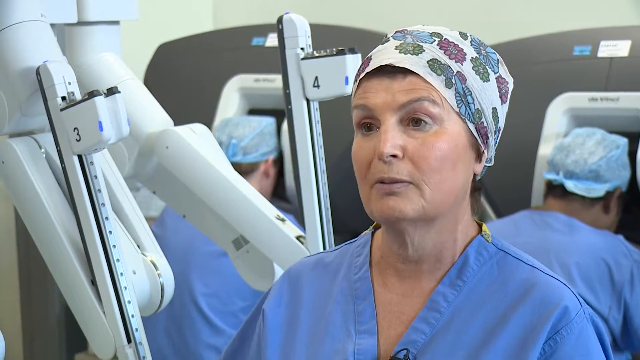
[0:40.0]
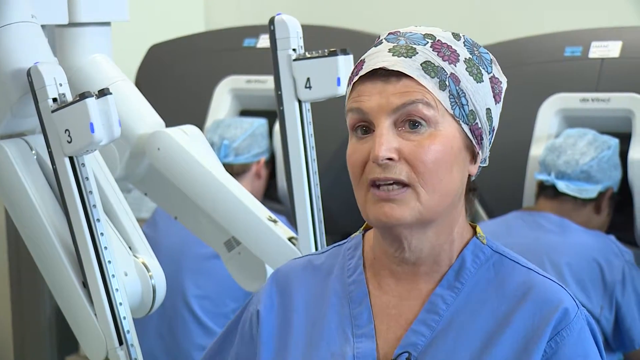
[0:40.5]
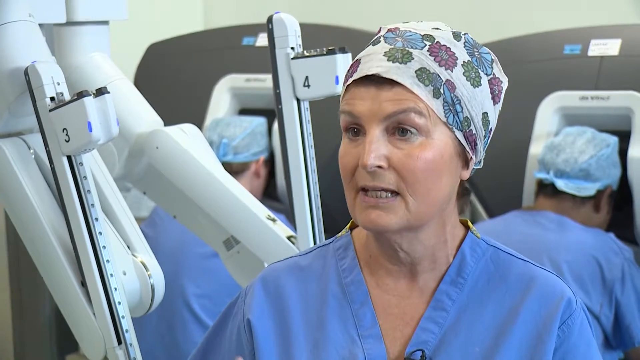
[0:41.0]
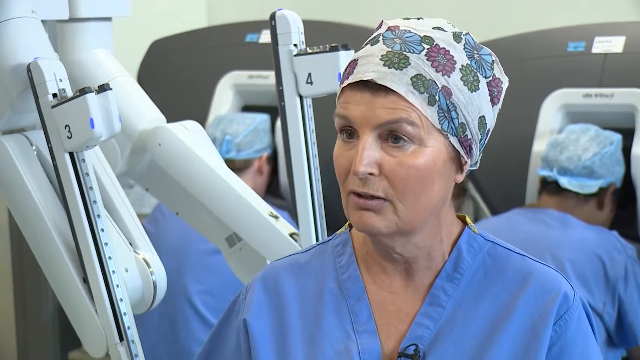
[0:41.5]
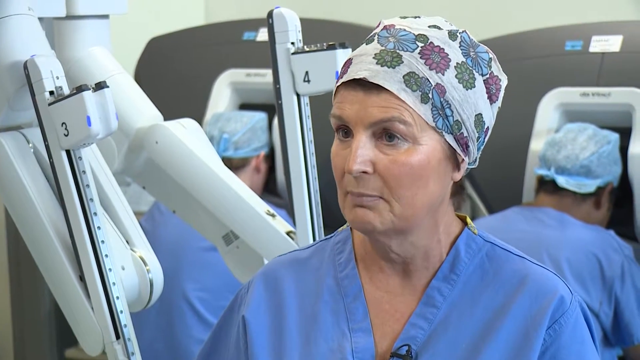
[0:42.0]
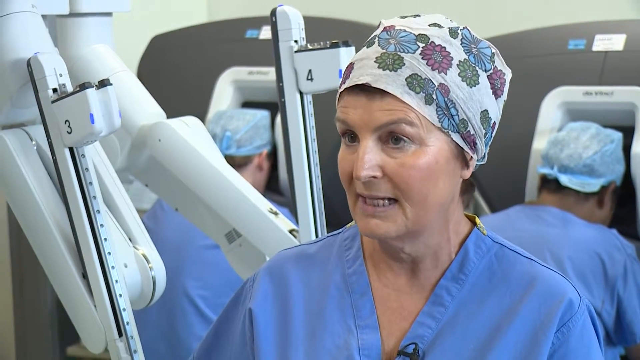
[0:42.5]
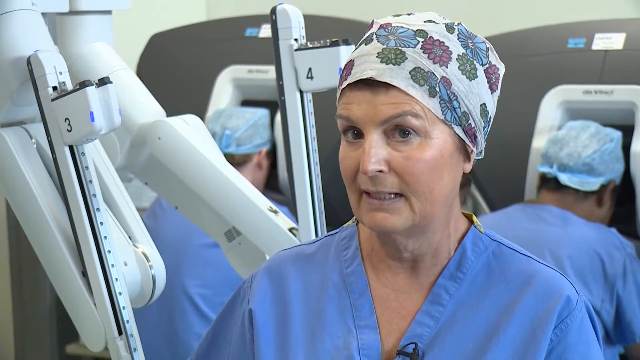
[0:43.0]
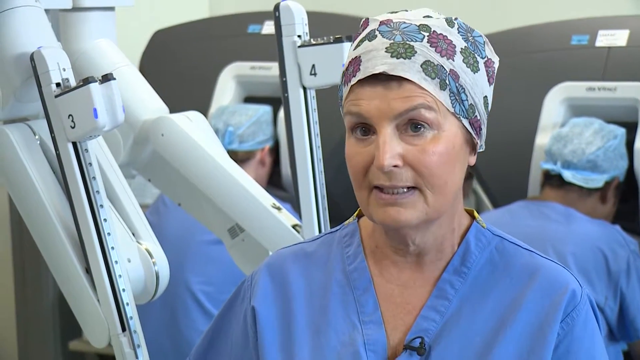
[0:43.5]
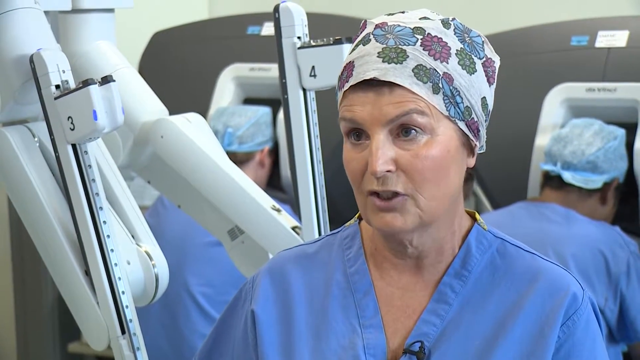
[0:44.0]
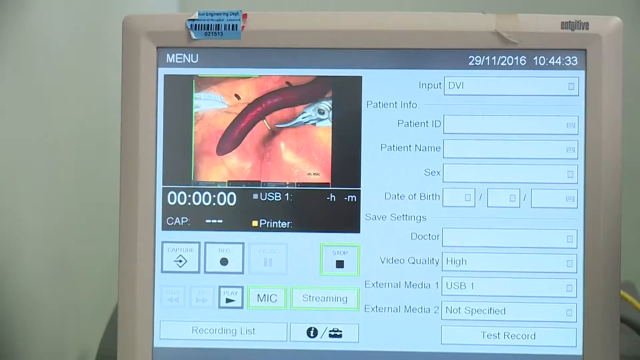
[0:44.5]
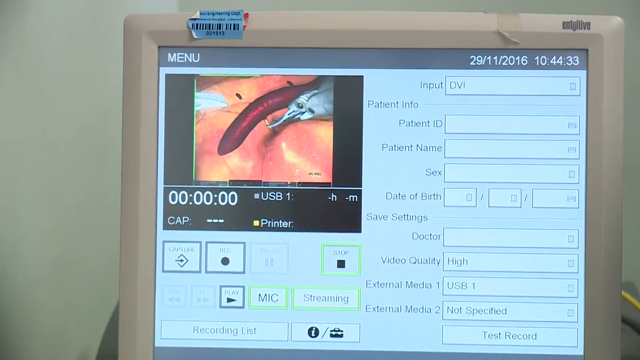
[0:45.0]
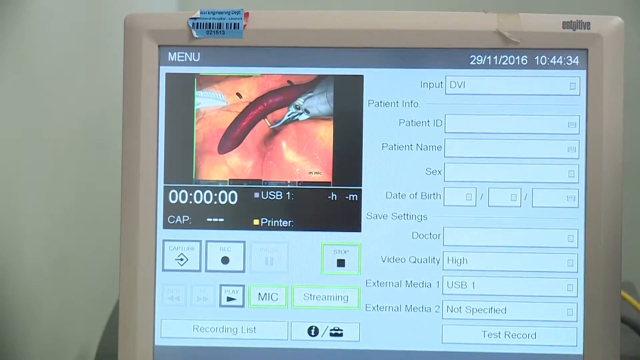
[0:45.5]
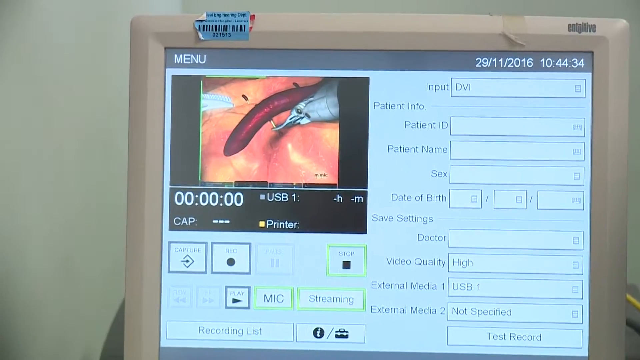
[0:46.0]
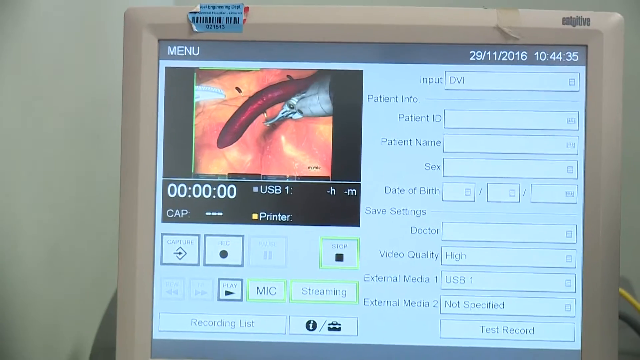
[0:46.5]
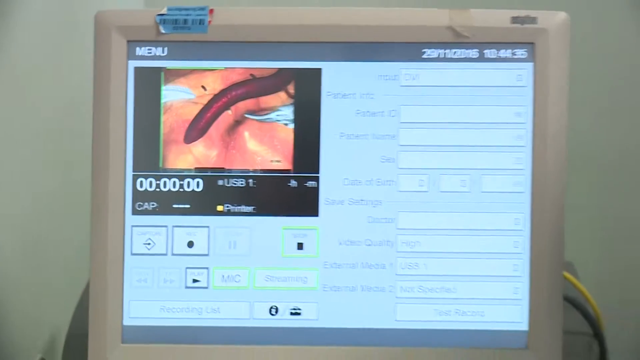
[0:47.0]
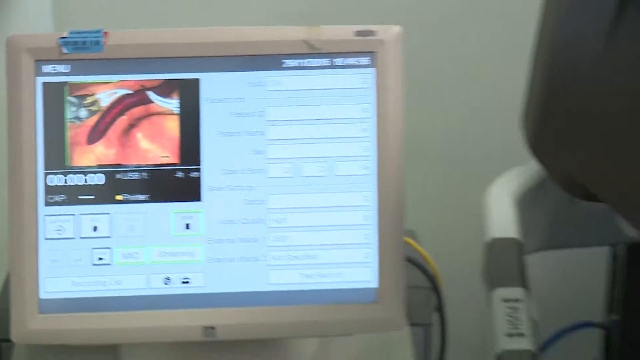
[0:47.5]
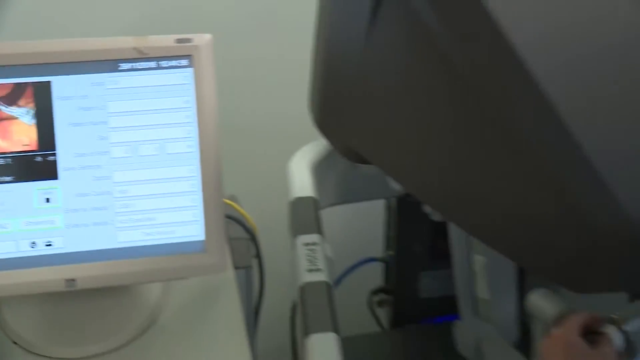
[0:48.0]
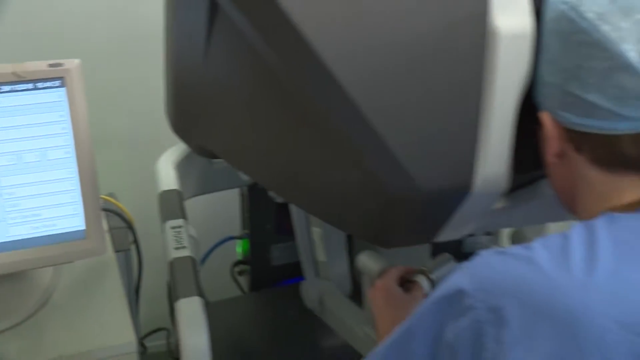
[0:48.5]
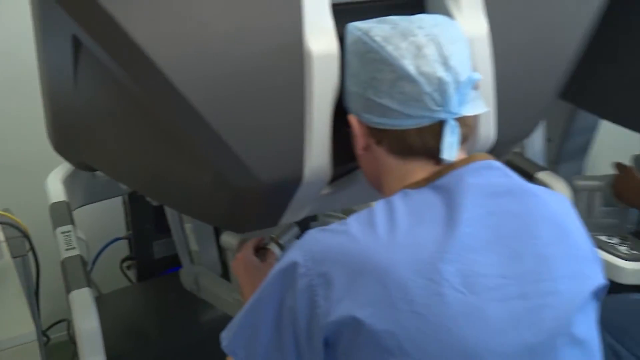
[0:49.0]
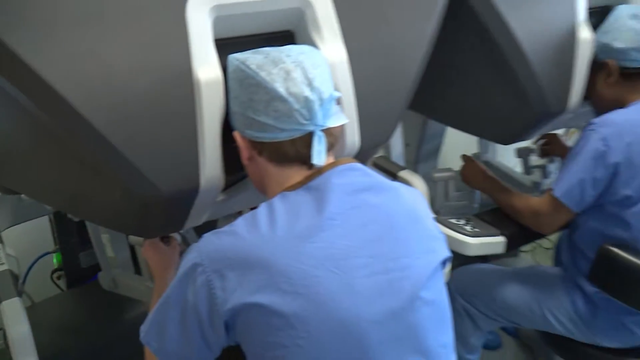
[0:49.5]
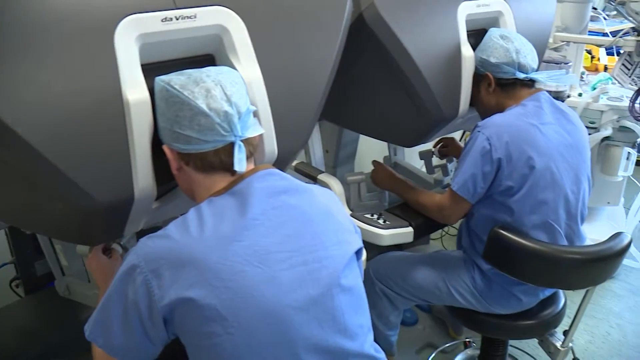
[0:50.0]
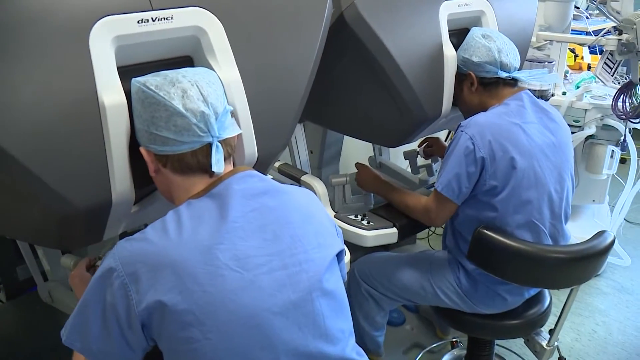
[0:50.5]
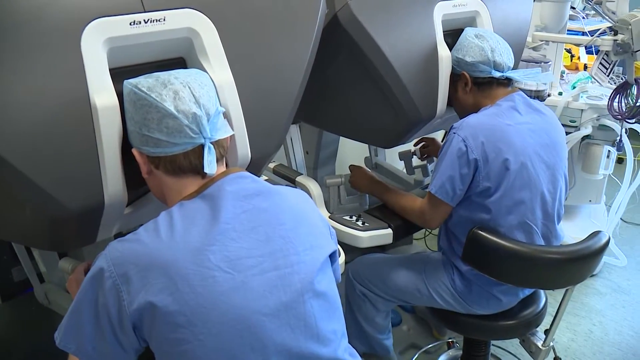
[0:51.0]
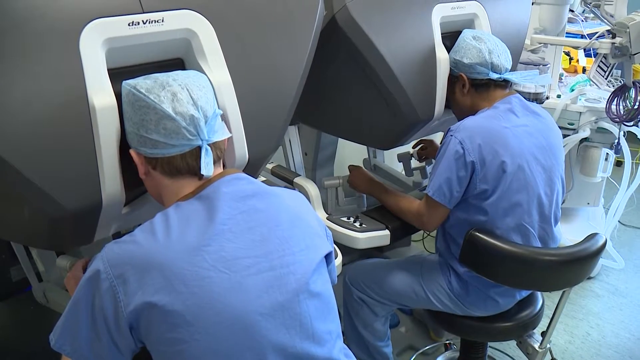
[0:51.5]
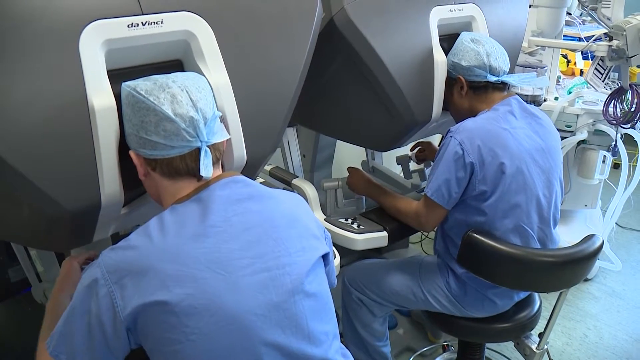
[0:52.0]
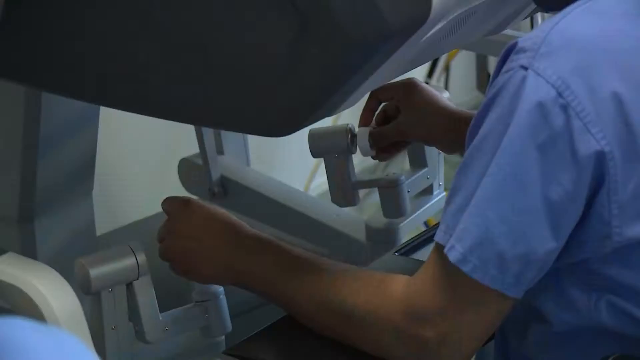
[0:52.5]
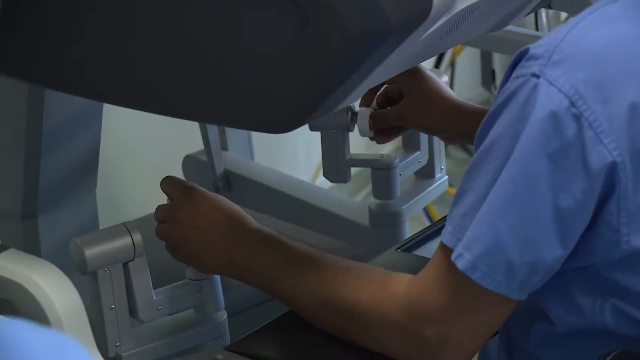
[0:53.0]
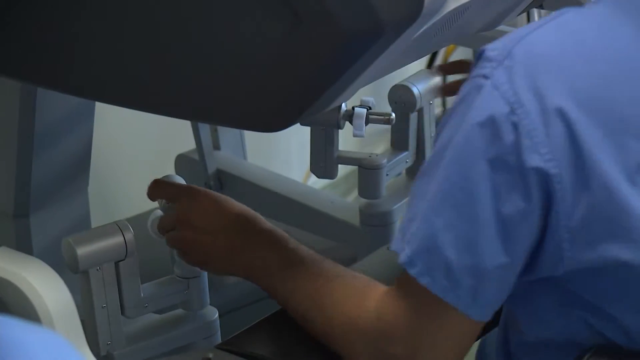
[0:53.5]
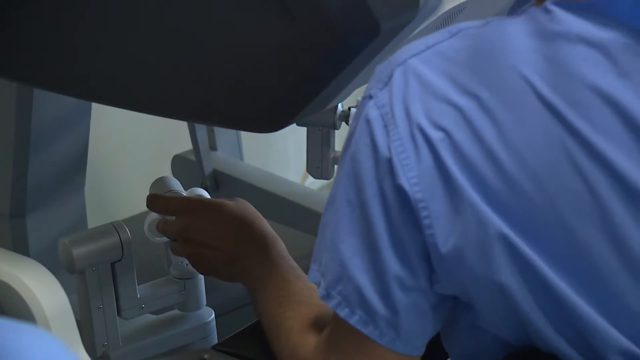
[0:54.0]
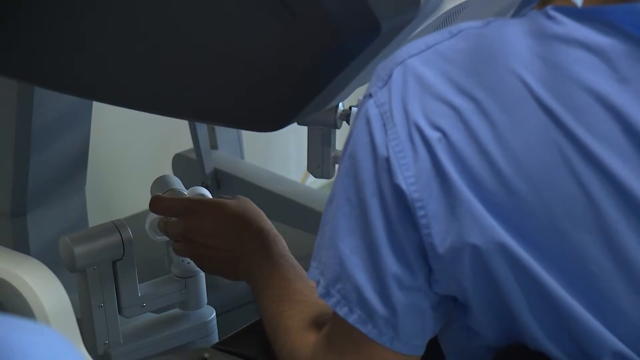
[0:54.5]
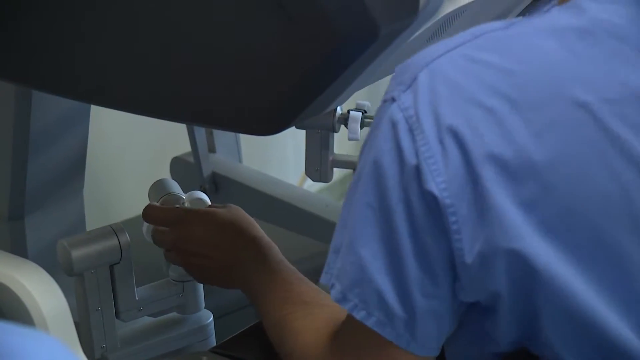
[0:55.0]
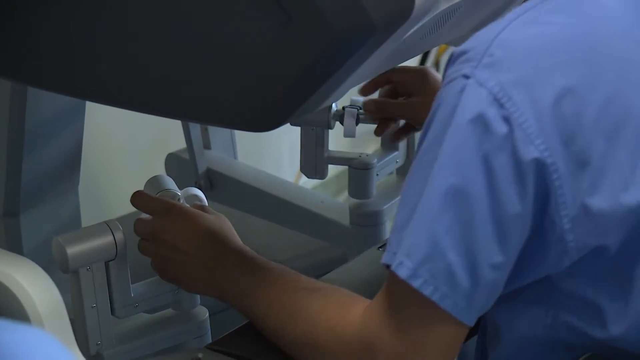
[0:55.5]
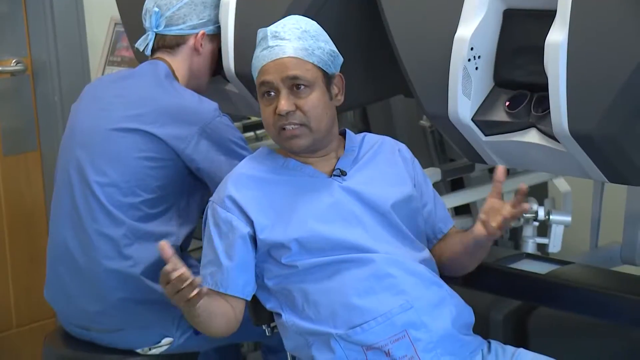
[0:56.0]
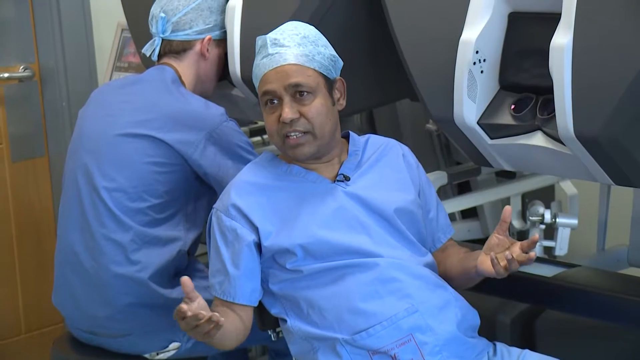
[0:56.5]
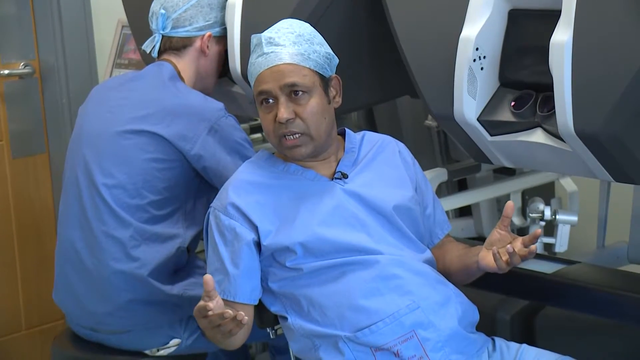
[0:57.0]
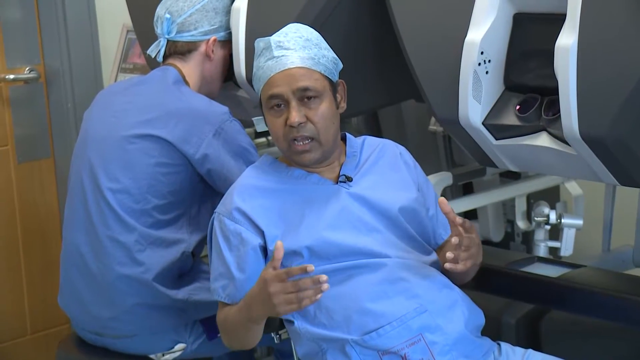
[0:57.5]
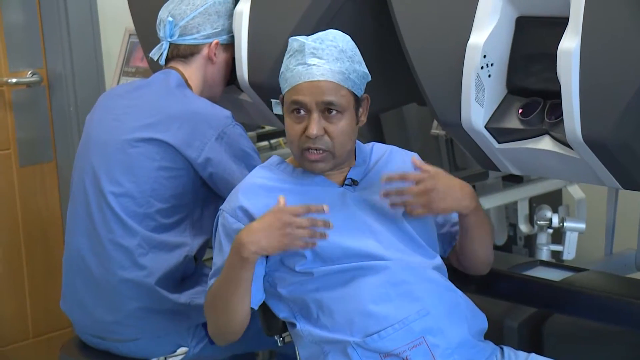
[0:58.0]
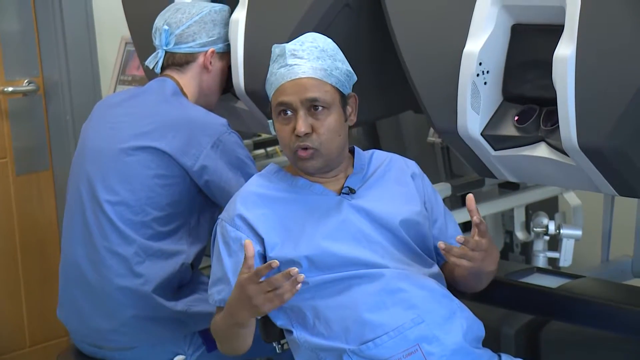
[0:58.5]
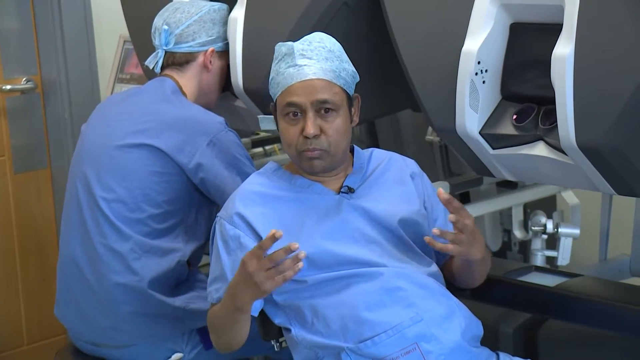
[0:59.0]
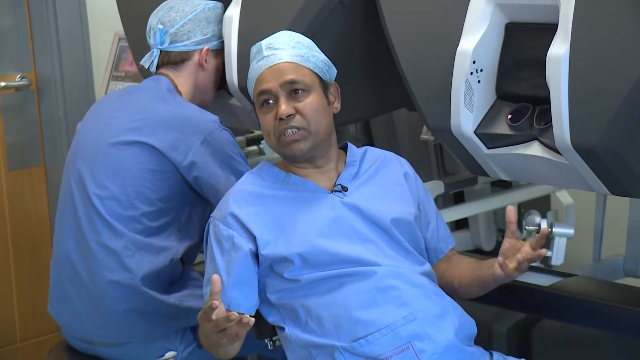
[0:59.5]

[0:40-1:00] A female medical professional in blue scrubs and a white cap with floral patterns faces left. To her left are two white arms of a machine labeled 3 and 4. Behind her are two male professionals, also in blue scrubs and blue caps. She speaks passionately to the camera people. A white computer monitor shows an illustration or simulation of the machines operating on a person in the upper left corner. The camera pans to the right to show two professionals, facing left and wearing blue scrubs and blue caps, practicing with black machines that they stick their heads into while using joysticks beneath the machines. A close-up shows one of them holding the joysticks. From another angle, the medical professional on the left is still working while the one on the right looks over his right shoulder and speaks to the camera people.